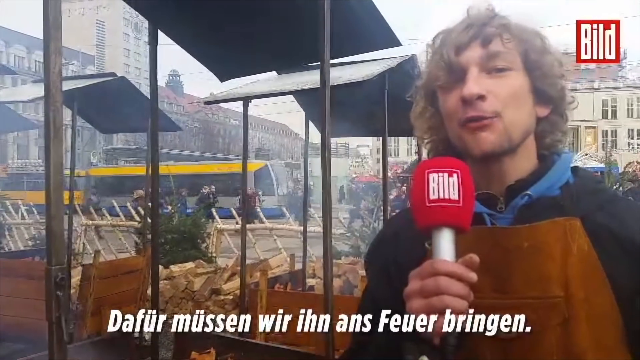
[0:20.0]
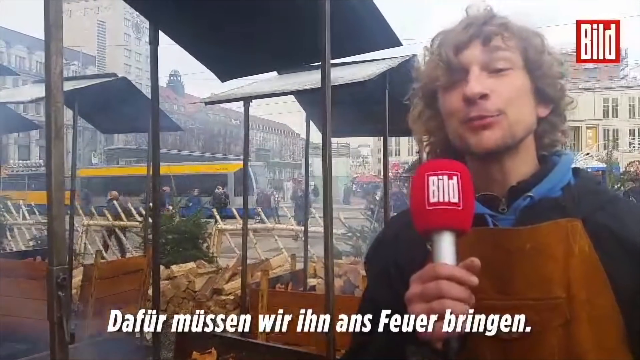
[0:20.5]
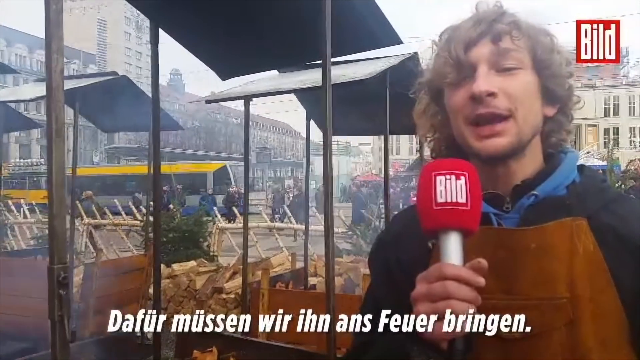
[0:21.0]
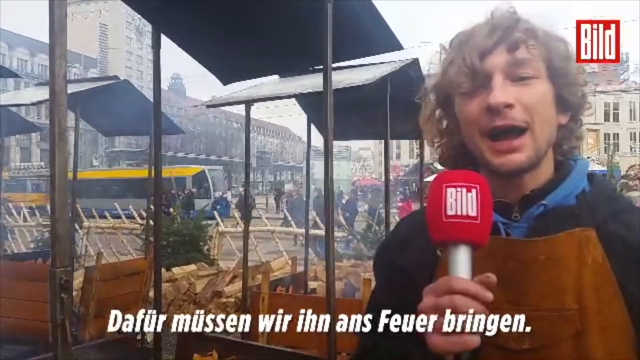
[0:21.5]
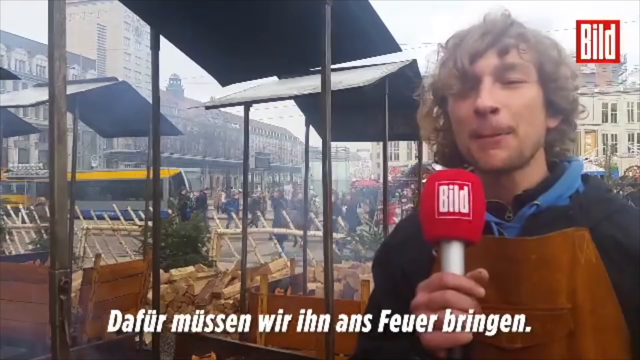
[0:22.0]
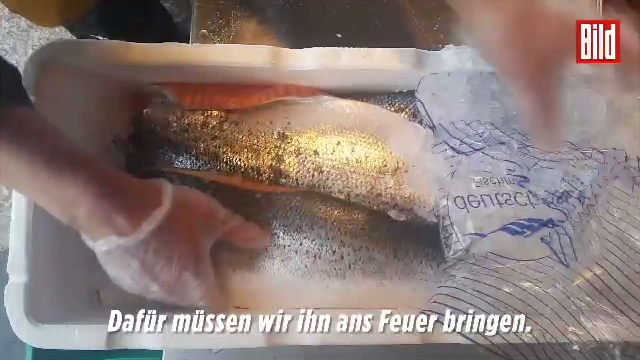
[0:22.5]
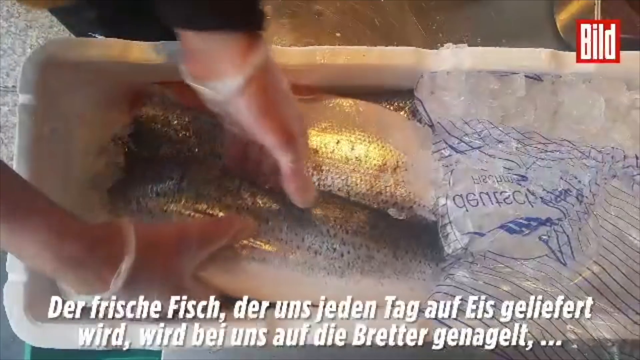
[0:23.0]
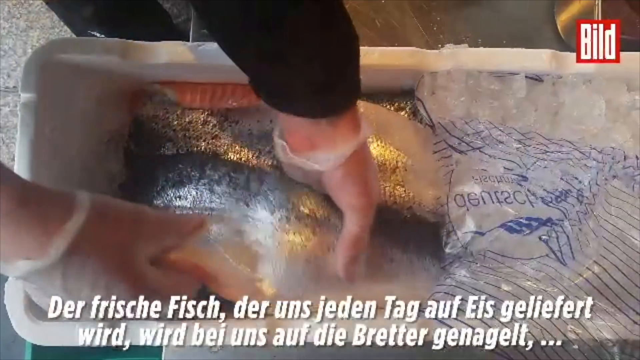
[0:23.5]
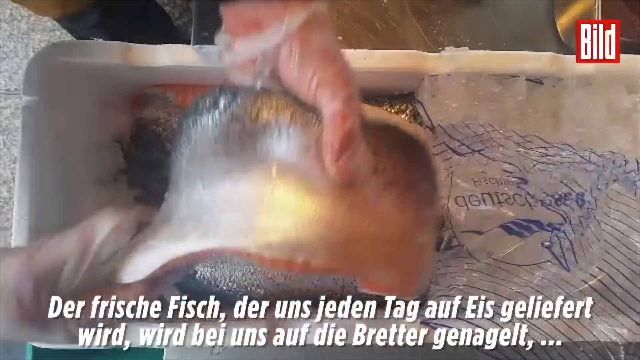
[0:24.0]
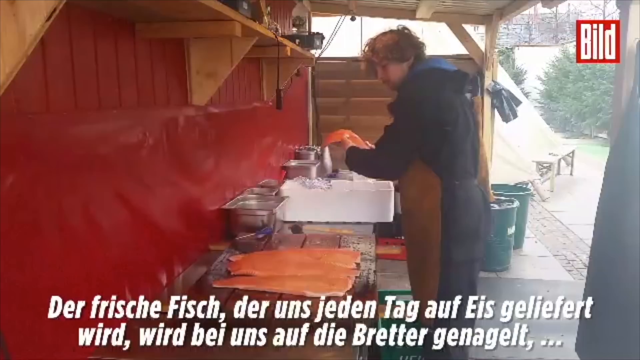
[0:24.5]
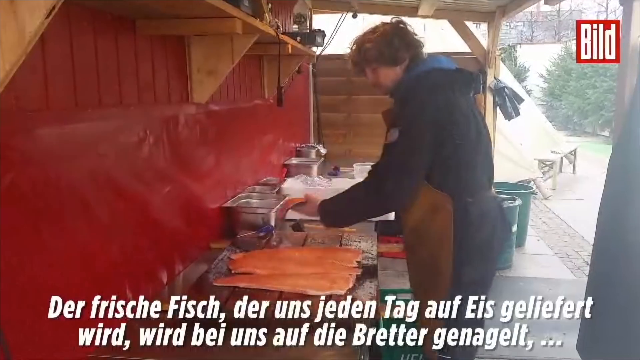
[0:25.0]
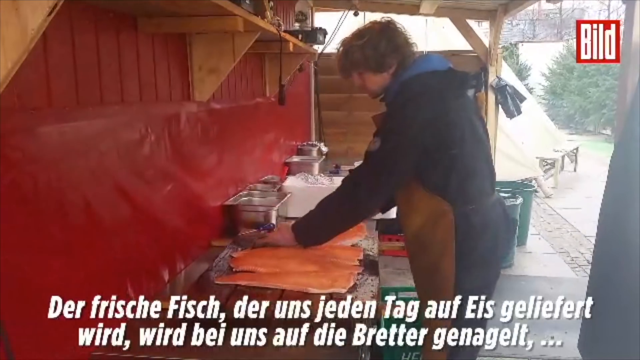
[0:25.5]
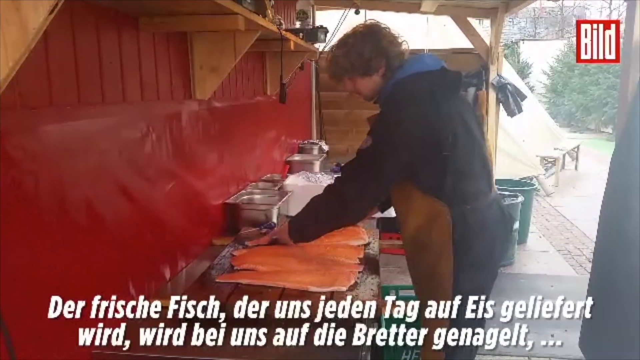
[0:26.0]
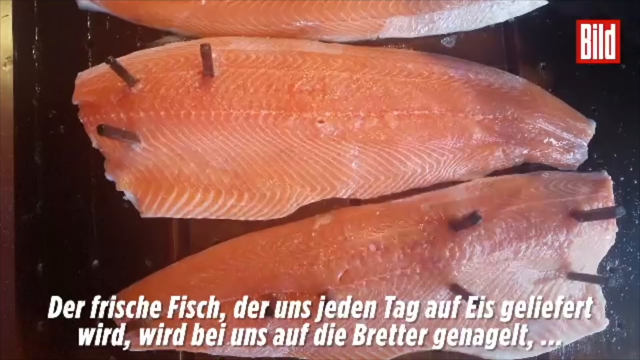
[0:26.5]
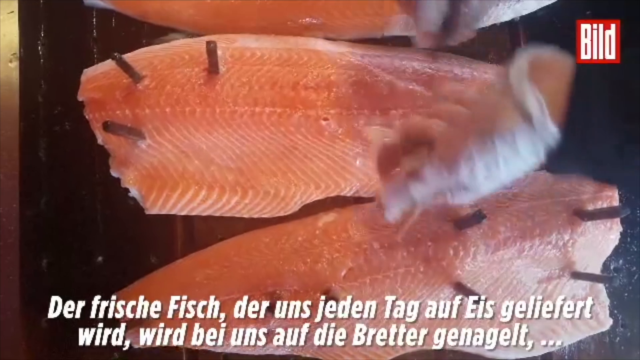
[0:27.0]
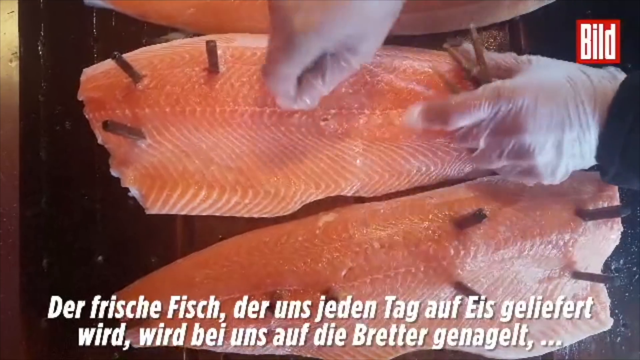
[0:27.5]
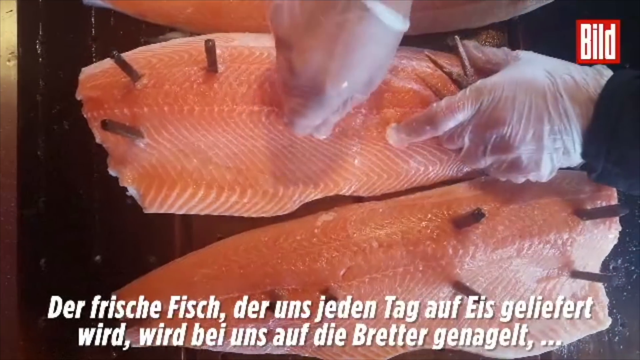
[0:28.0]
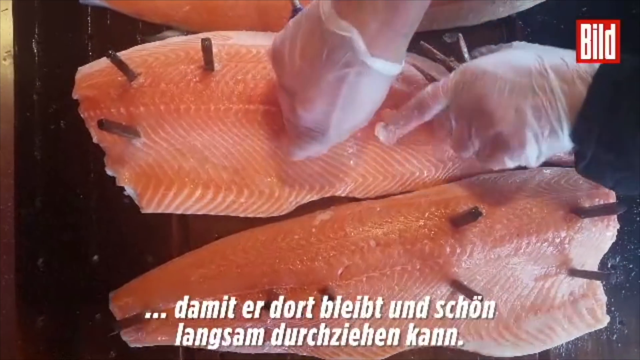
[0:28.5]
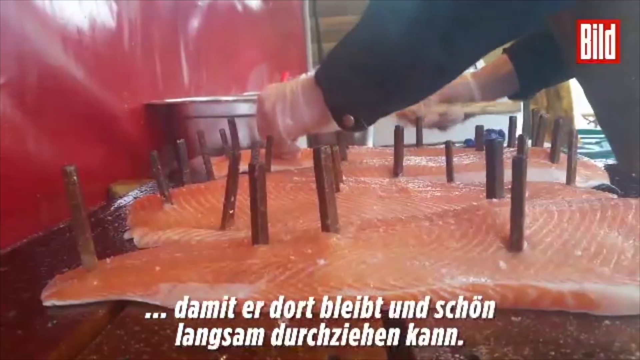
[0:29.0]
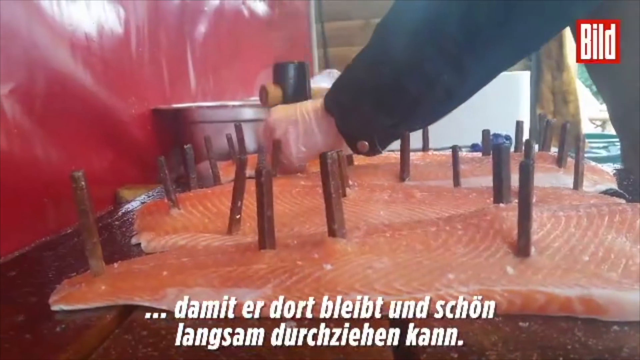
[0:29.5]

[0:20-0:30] In a room, fish fillets are being prepared. Something is put on top of the fish, which looks like wood or maybe something like a nail, and it is hammered in with a hammer. The fish is clean, and they seem to be getting ready to fry it. As the interviewed man talks, a yellow bus passes in the background. He has short curly hair, wears a blue jacket and a brown apron, and holds a microphone with blue writing on it while talking facing the camera. The camera is stable, but the quality is bad and blurry; his face is not shown clearly, and the lens looks a little misty.